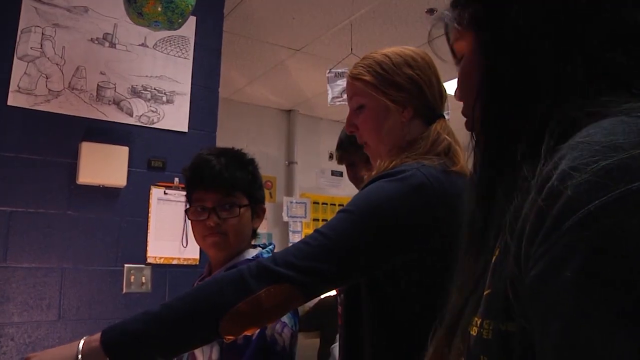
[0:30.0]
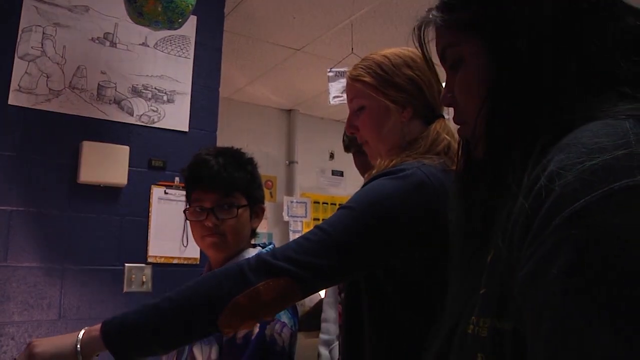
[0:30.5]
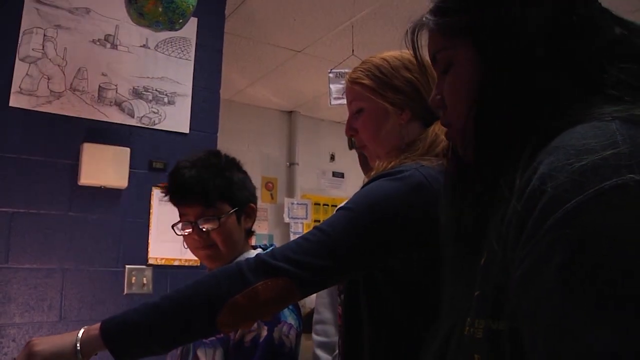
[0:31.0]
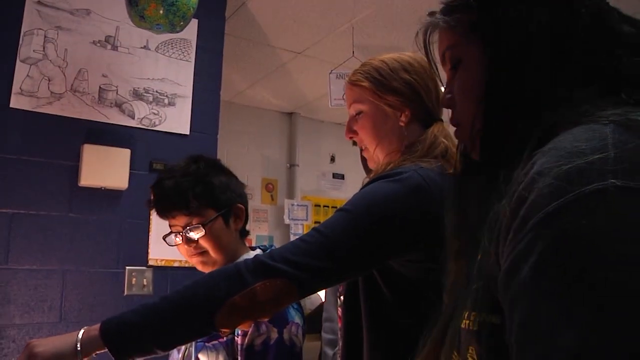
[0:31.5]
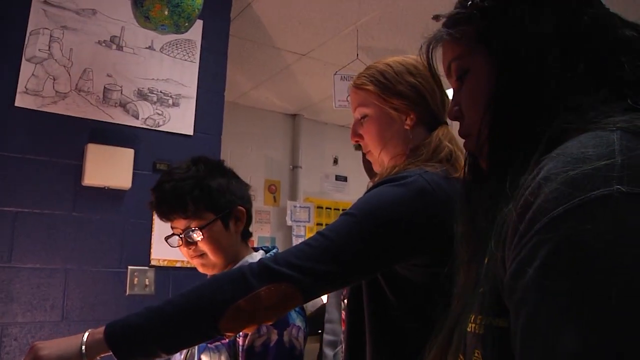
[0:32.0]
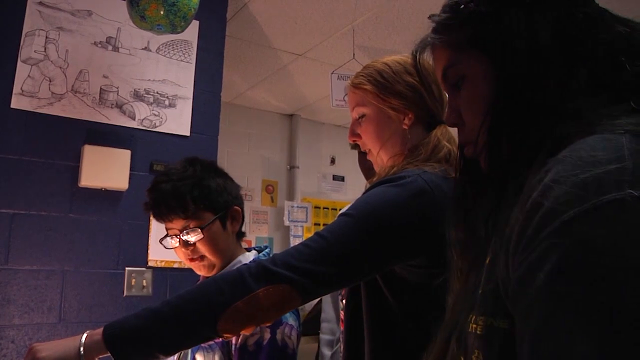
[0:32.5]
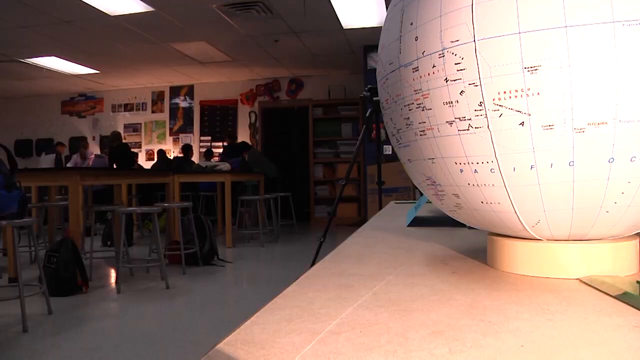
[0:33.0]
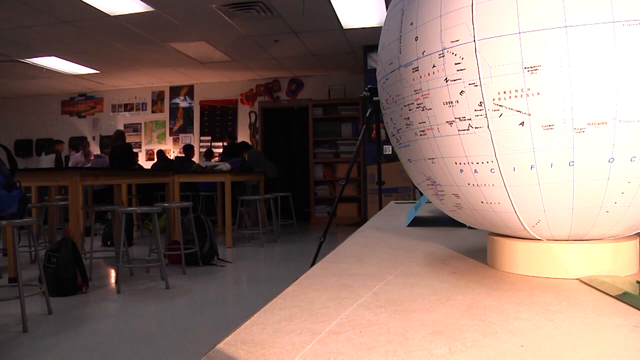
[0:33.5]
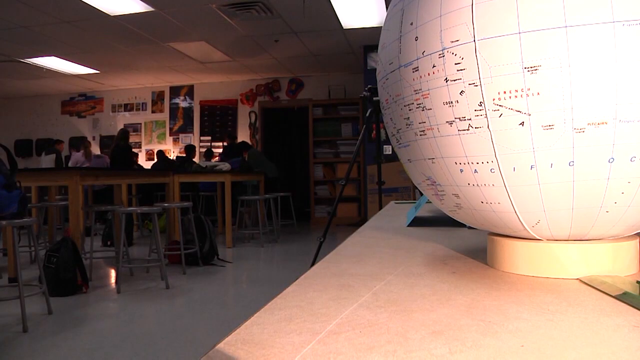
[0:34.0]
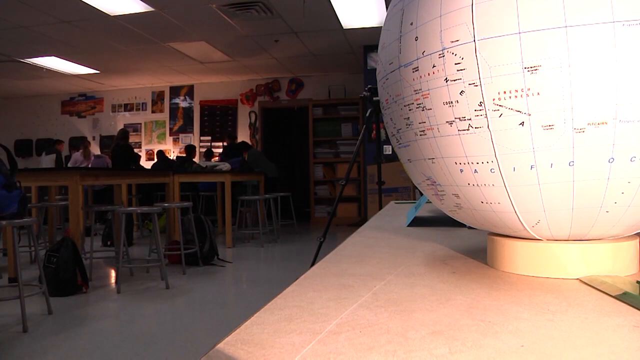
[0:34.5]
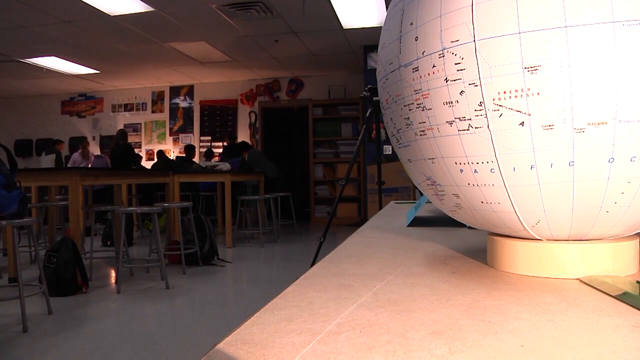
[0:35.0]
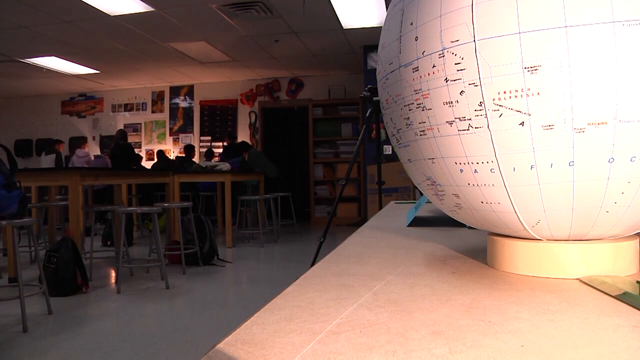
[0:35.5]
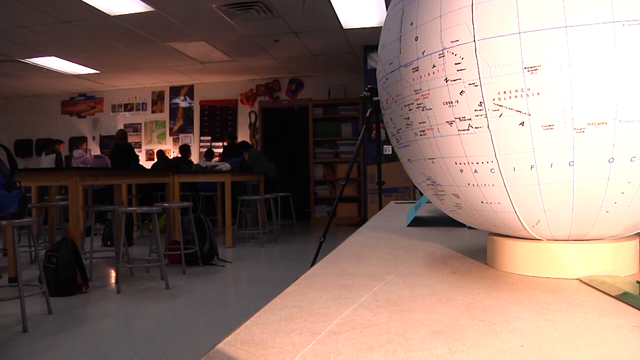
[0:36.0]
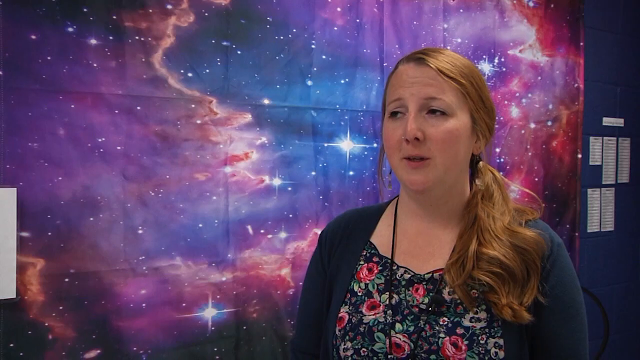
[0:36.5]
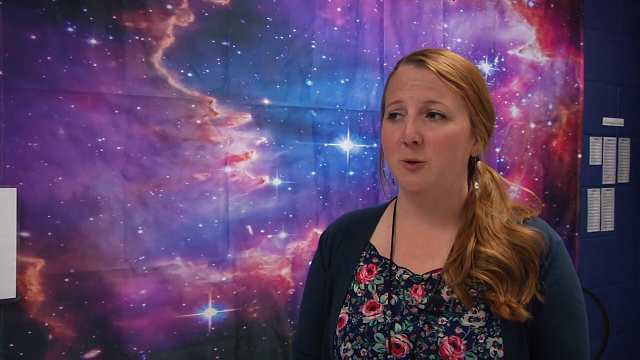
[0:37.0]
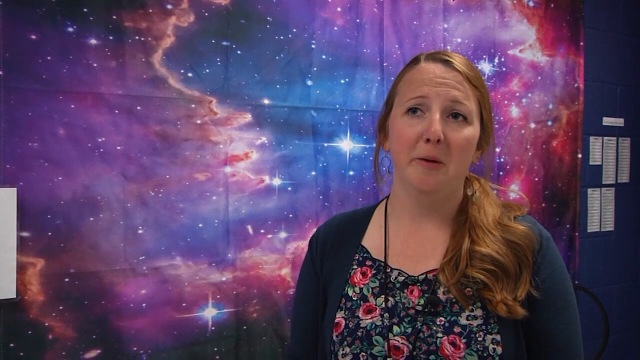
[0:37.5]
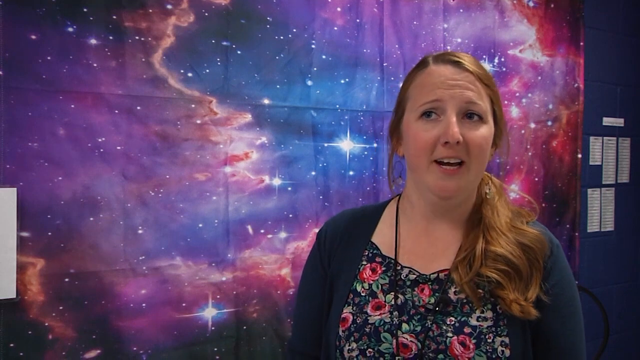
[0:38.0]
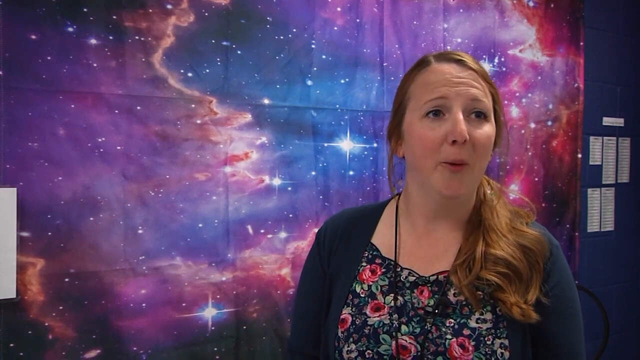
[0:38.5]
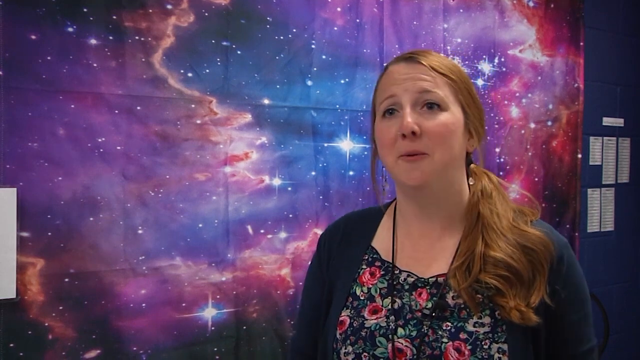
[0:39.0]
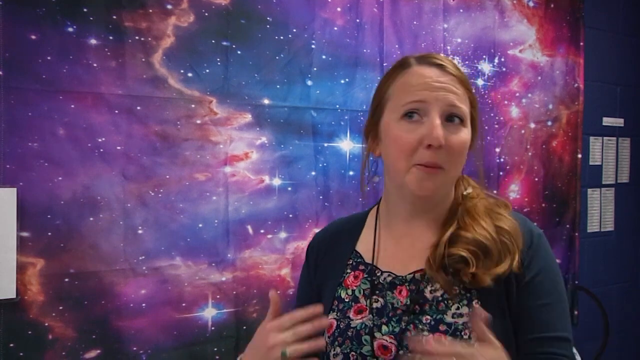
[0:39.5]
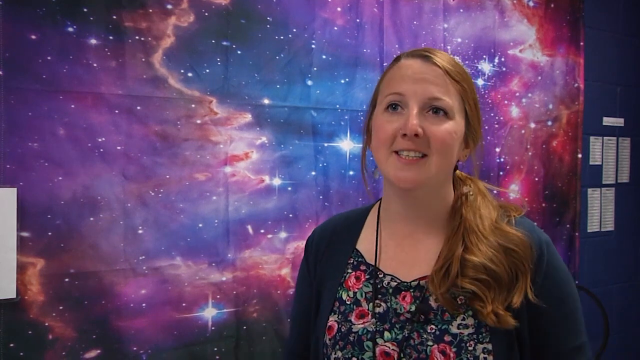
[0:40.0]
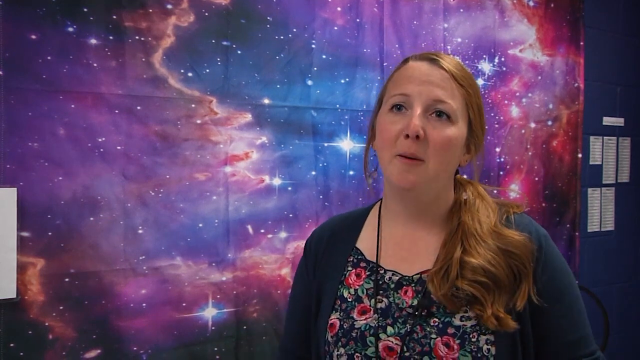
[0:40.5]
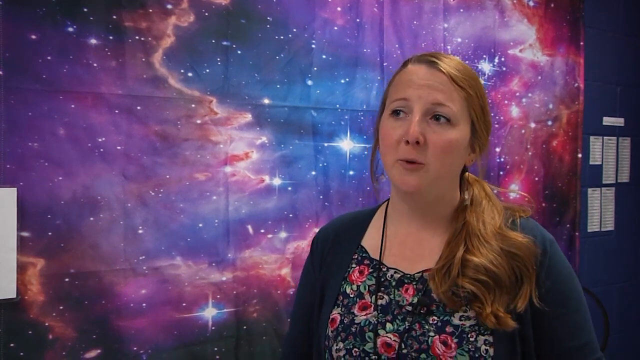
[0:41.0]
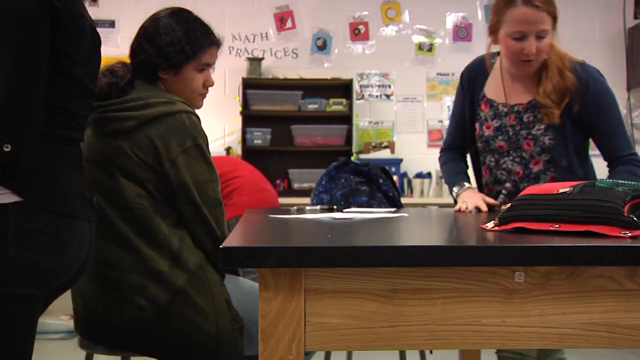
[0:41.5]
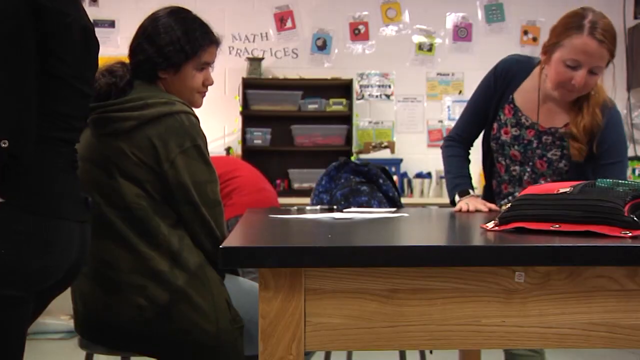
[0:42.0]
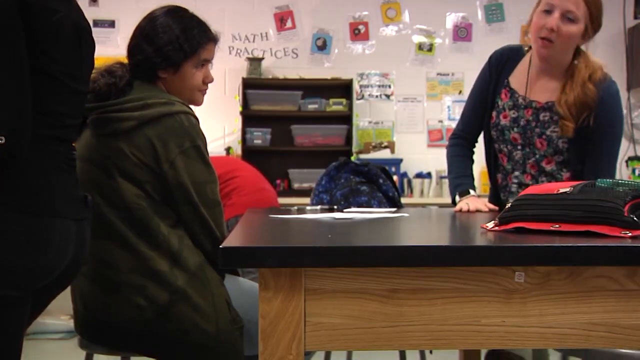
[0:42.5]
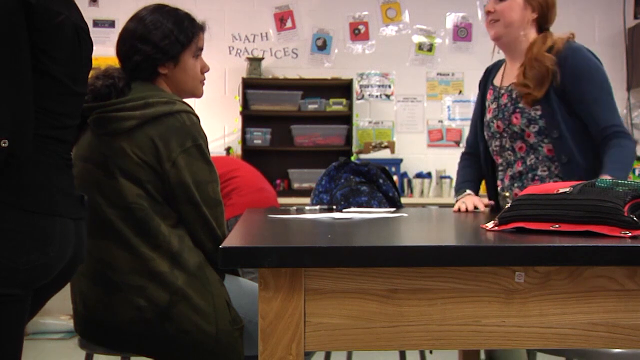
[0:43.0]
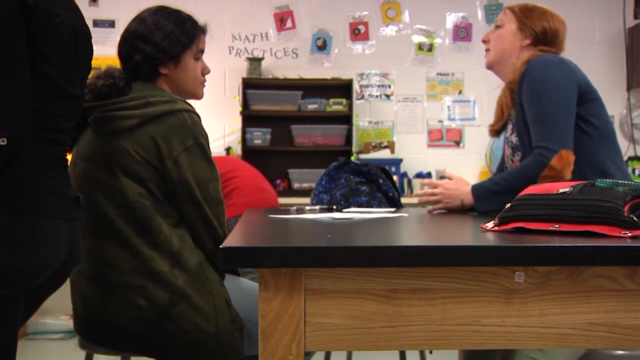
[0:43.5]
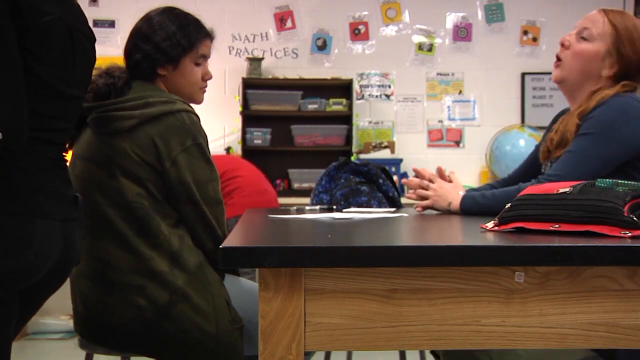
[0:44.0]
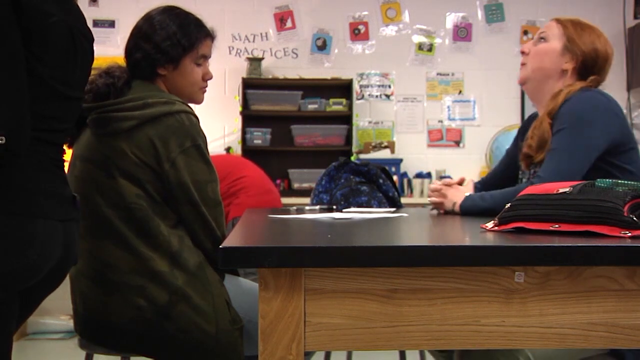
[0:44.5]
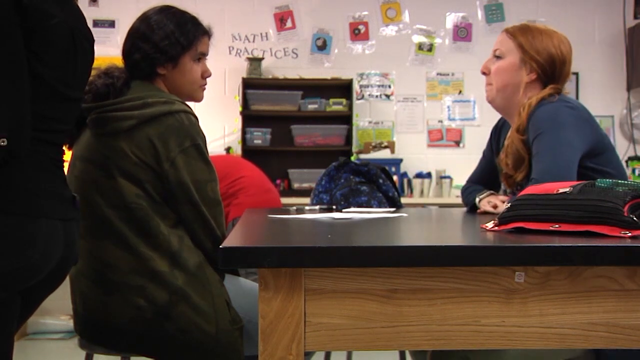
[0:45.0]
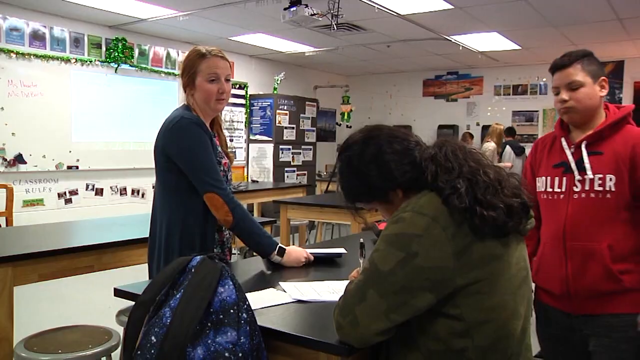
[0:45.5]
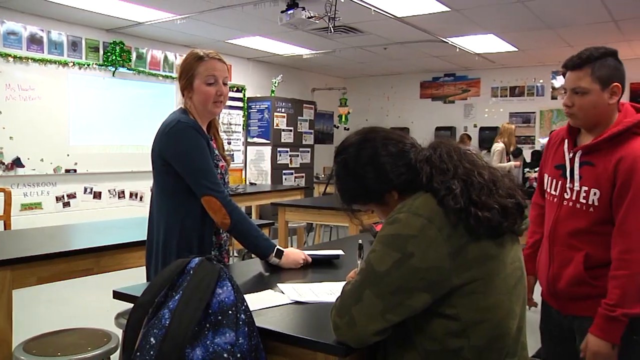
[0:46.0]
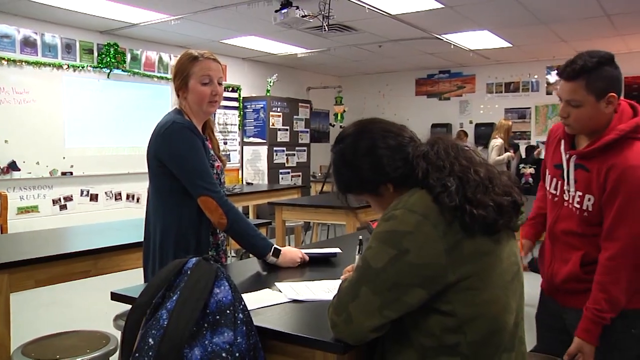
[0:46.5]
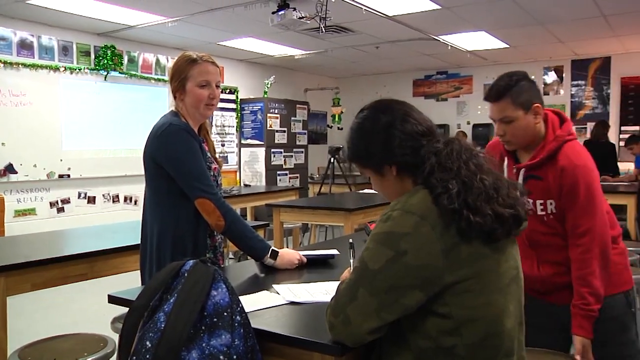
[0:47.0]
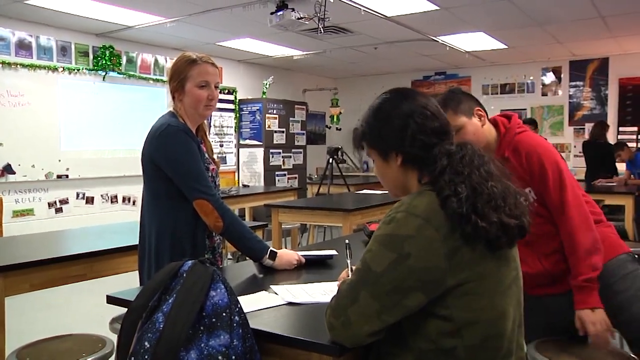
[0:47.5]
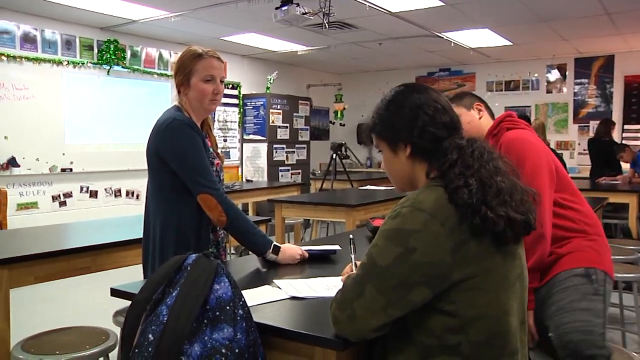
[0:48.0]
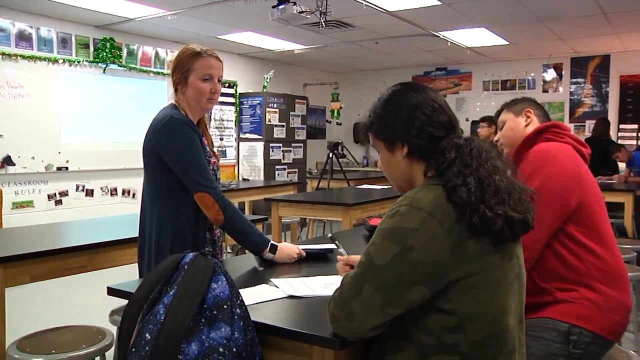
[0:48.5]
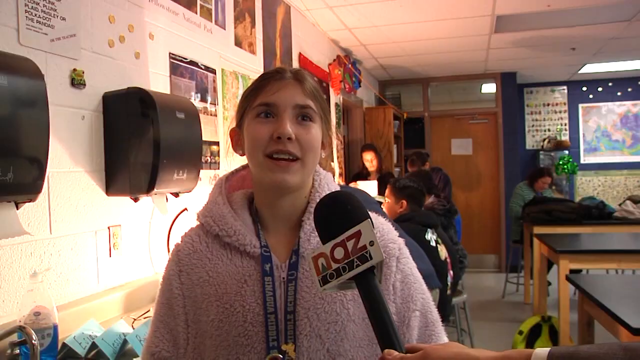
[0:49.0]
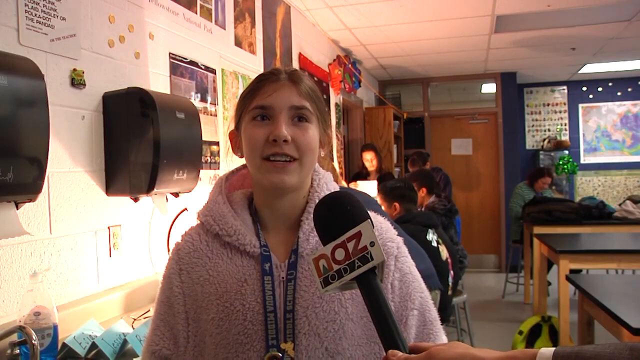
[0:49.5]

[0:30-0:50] A group of students is seen, then a globe with a light source emanating from underneath it to the right. The setting is a classroom with multiple wooden tables and gray chairs. A Caucasian woman with red hair speaks, with a poster of a universe with twinkling lights and stars behind her, and continues talking using different hand gestures. She then takes a seat in a classroom: she pulls a chair, sits down and puts her hand over a wooden desk with a black top. The scene transitions to three students around the desk: a Caucasian female with red hair, one with black hair, and a Caucasian male wearing a red hoodie.